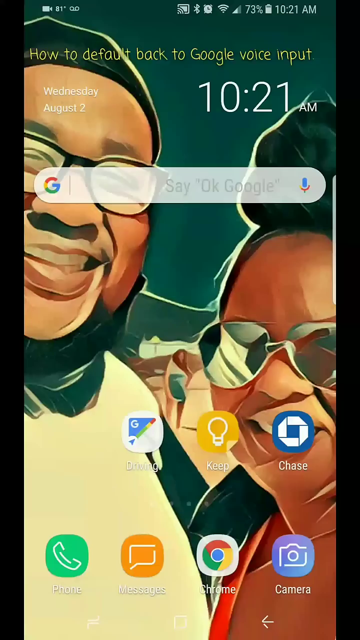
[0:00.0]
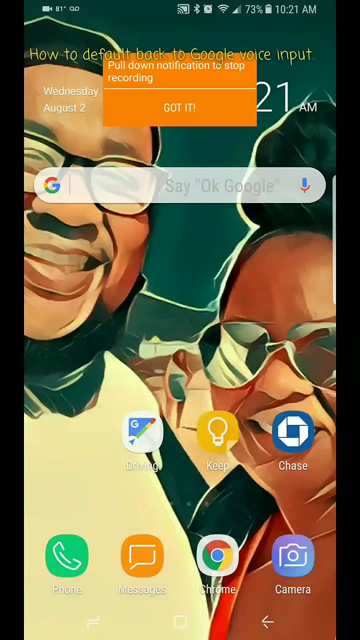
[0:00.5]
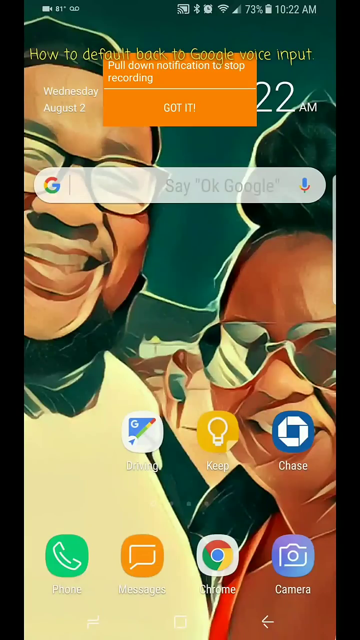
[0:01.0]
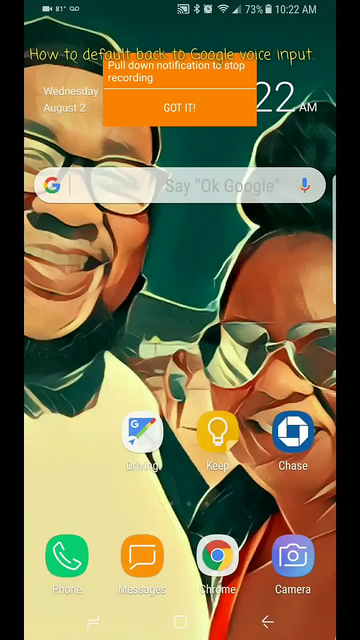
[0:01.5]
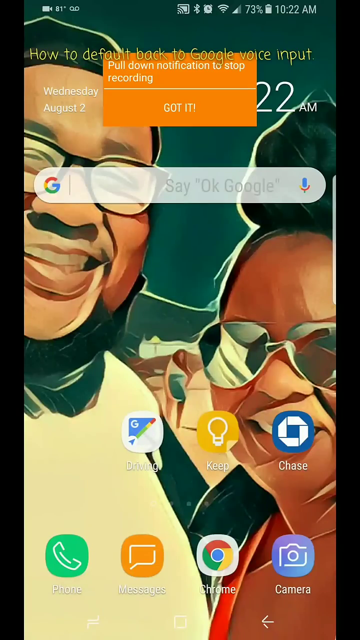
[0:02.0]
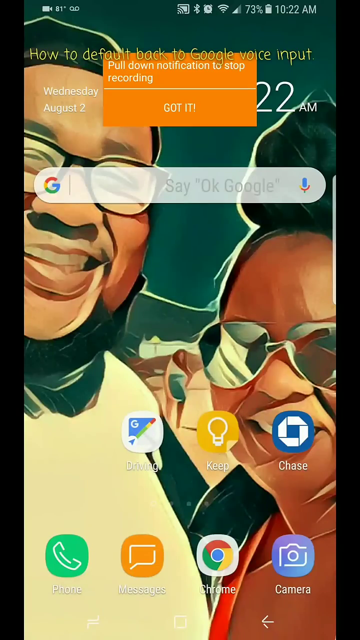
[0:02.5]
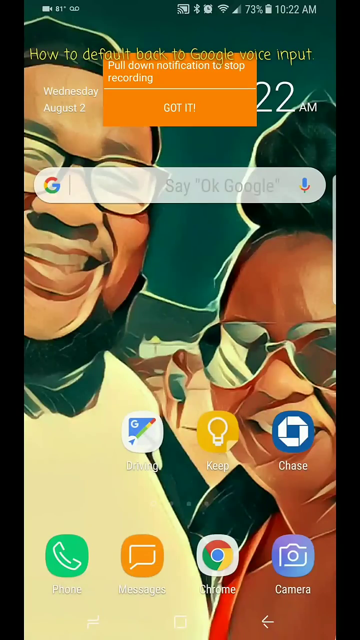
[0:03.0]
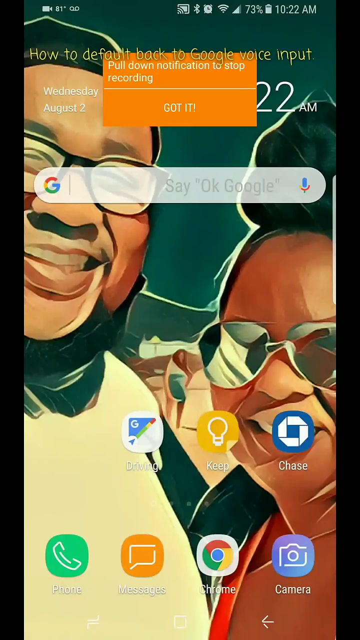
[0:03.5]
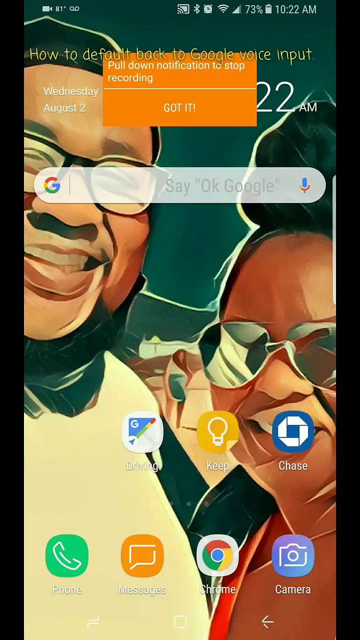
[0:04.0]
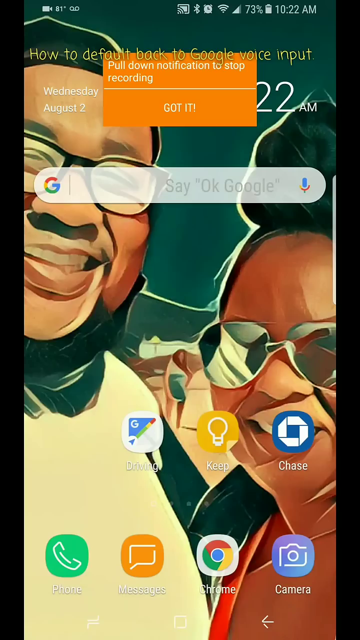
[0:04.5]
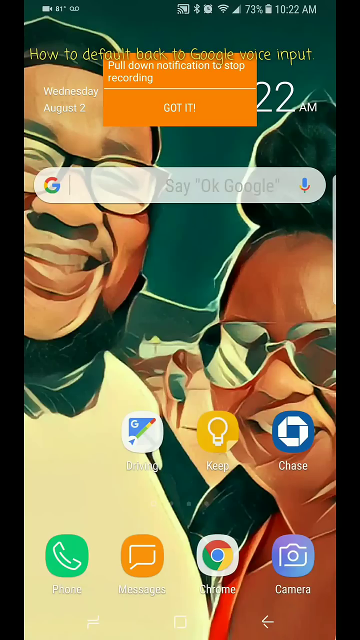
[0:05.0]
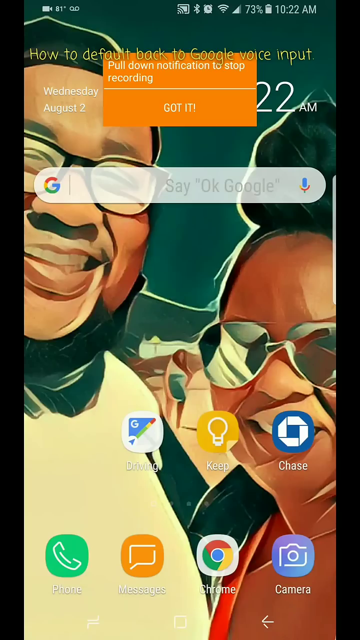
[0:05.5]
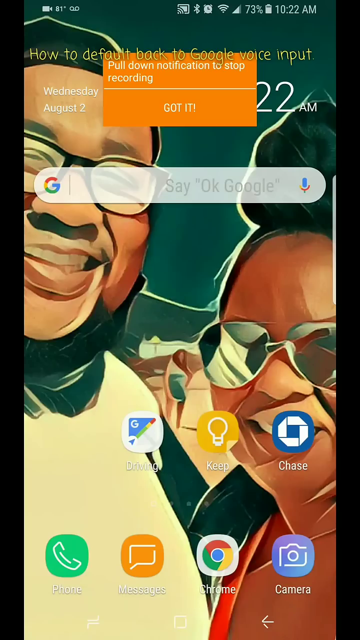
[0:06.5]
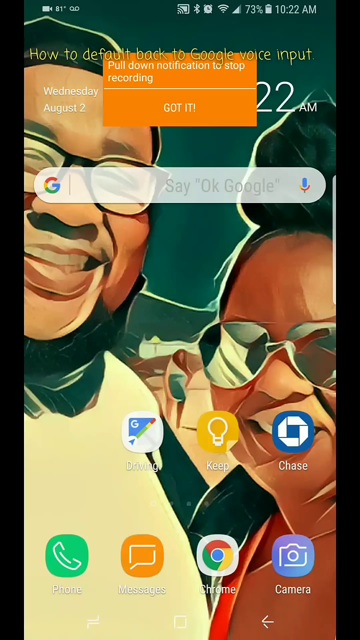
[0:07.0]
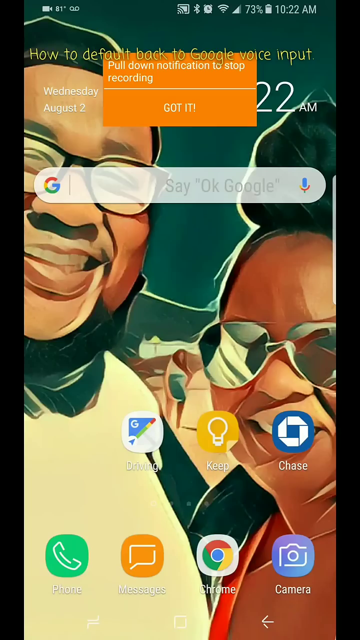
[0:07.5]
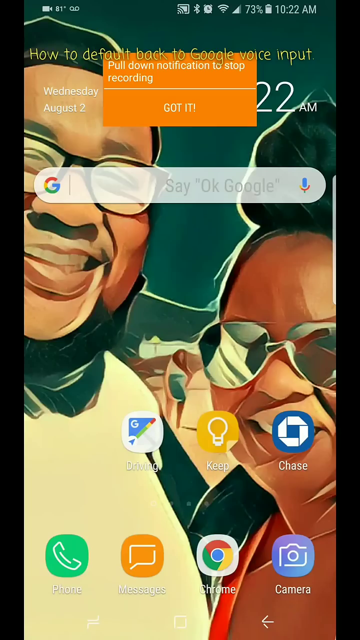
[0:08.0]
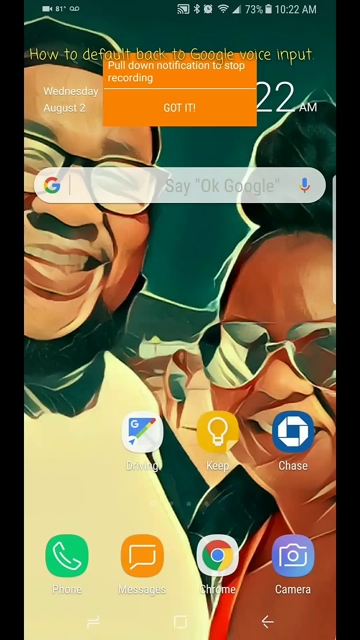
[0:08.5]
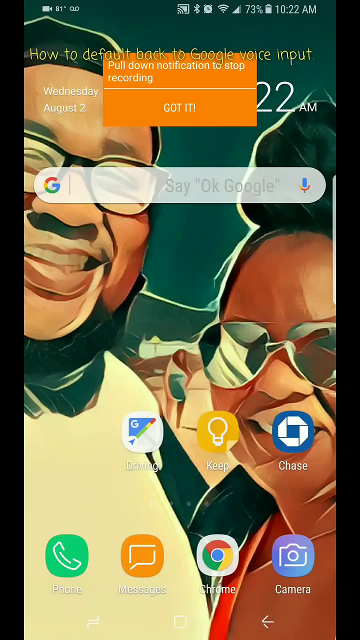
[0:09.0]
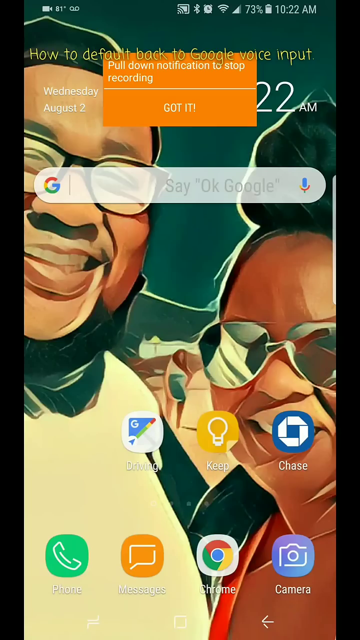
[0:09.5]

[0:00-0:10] The video opens on what looks like a screenshot of a phone, possibly a Samsung, with a wallpaper showing an animated cartoon of two smiling people: a black man wearing glasses and a white or black woman wearing sunglasses. At the top, yellow text reads "how to default back to google voice input". The battery life and other indicators are at the top. Below the how-to text, small white text reads "wednesday august 2nd", and above it, larger bold white text shows "10 21 a.m". There is also a text field for Google. A pull-down notification covers the time, with an orange box that says "got it".